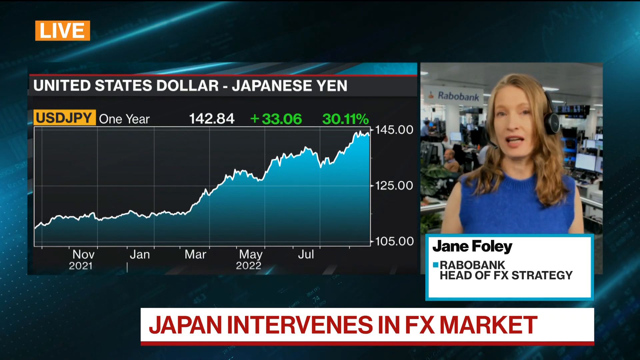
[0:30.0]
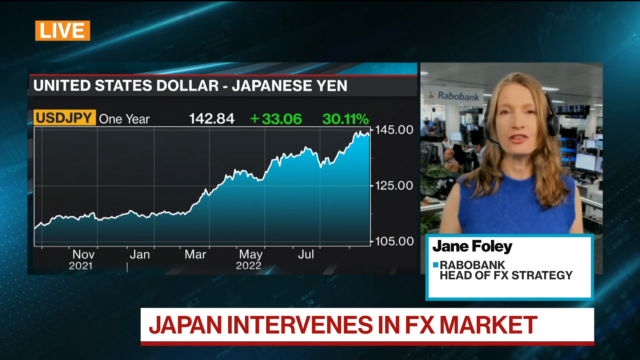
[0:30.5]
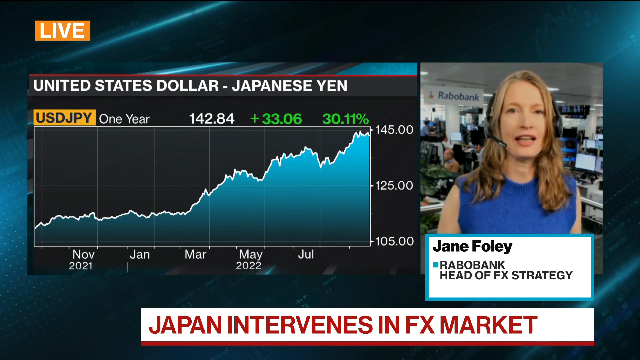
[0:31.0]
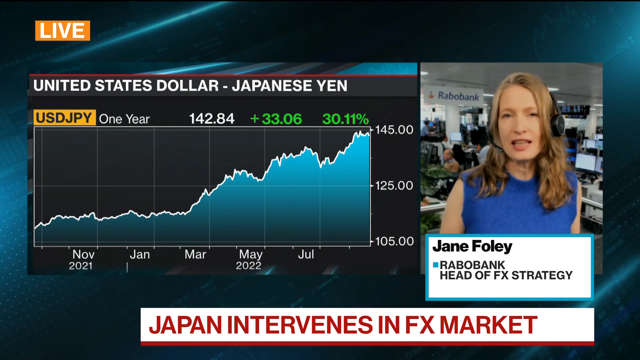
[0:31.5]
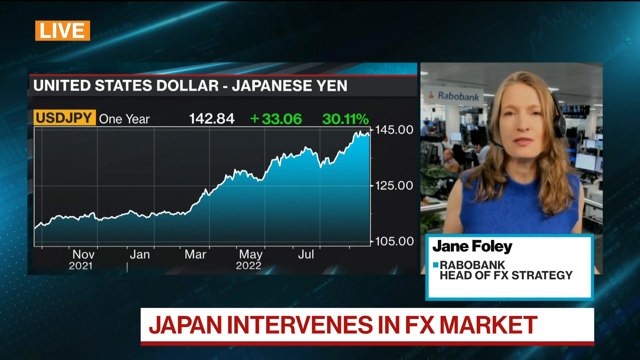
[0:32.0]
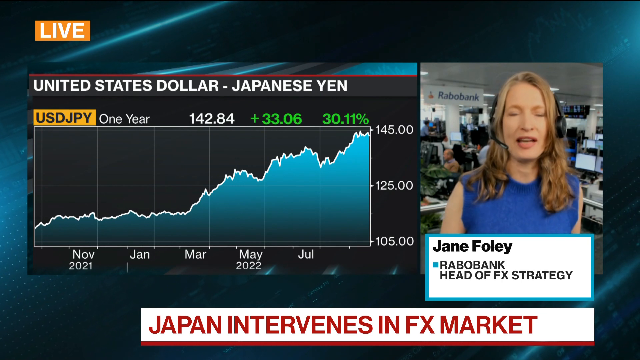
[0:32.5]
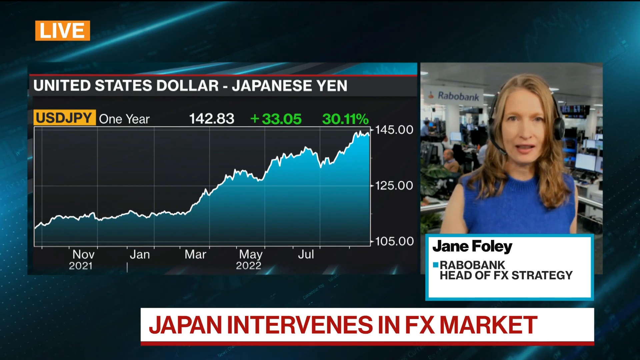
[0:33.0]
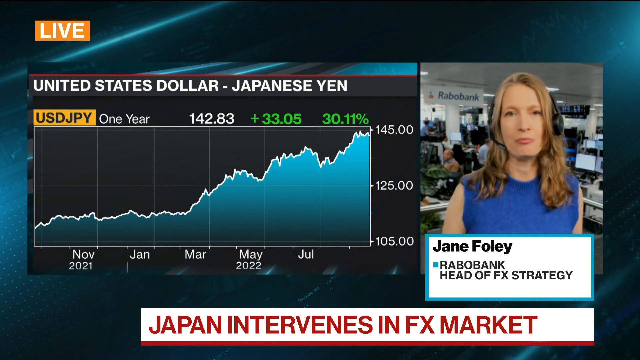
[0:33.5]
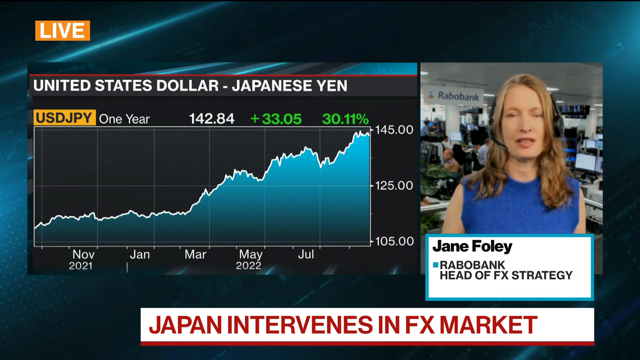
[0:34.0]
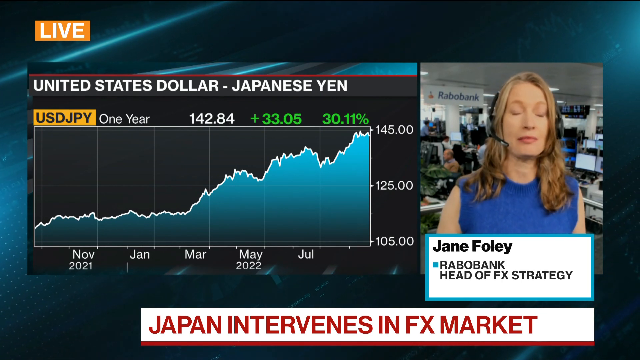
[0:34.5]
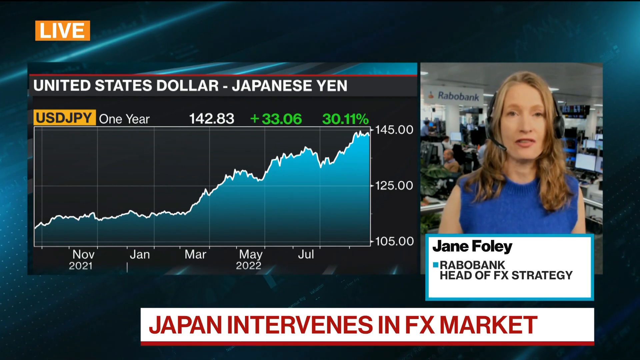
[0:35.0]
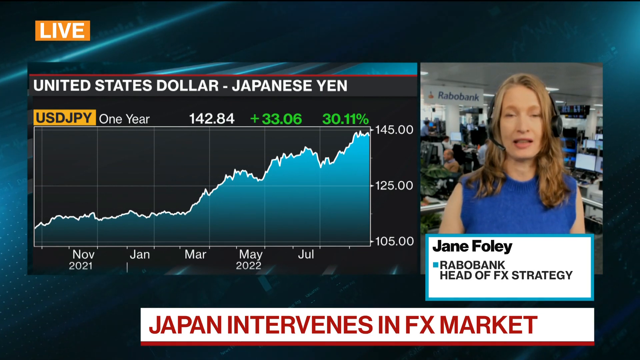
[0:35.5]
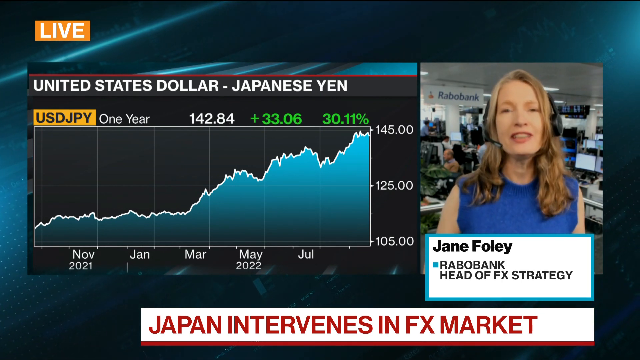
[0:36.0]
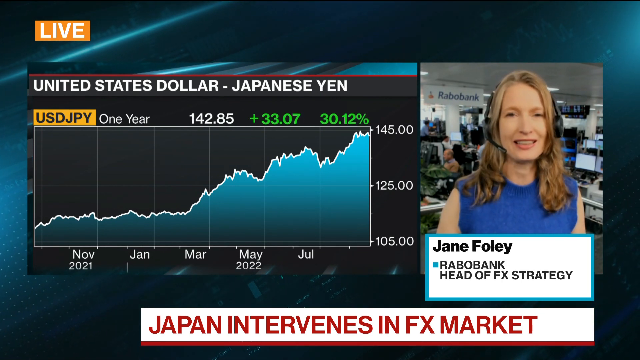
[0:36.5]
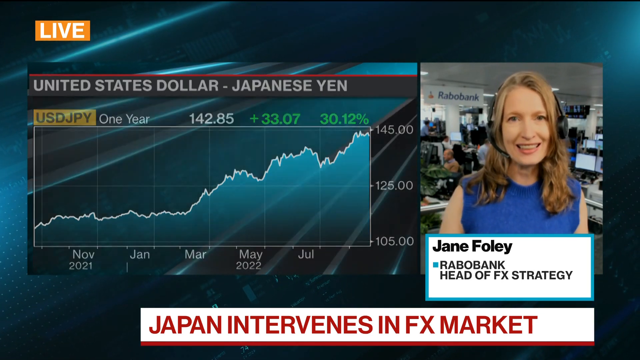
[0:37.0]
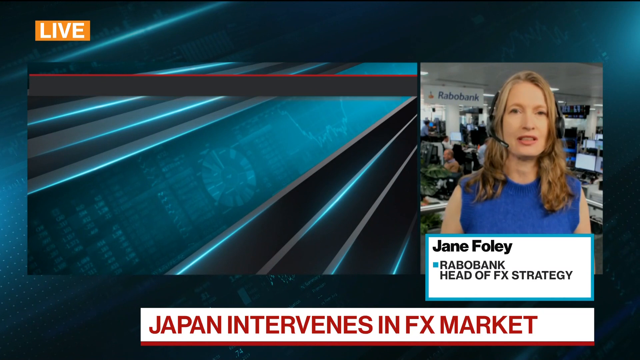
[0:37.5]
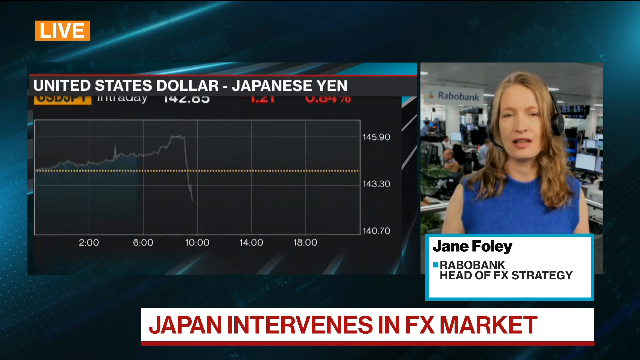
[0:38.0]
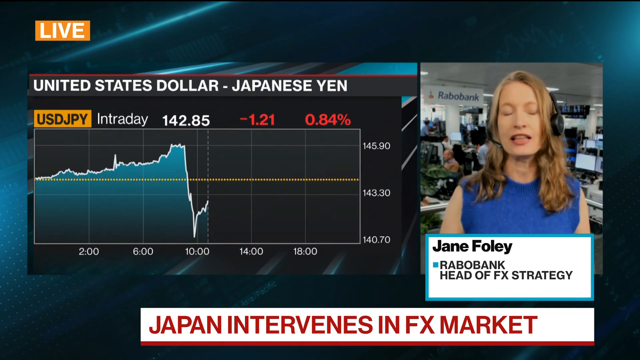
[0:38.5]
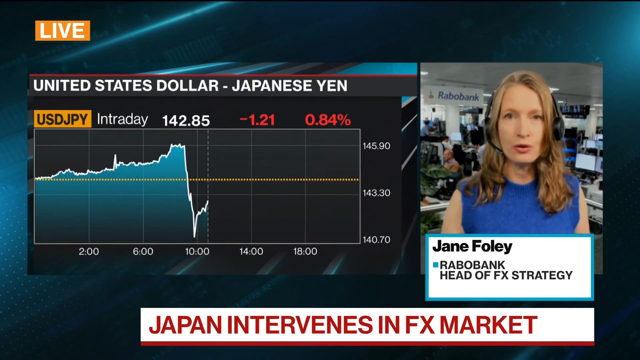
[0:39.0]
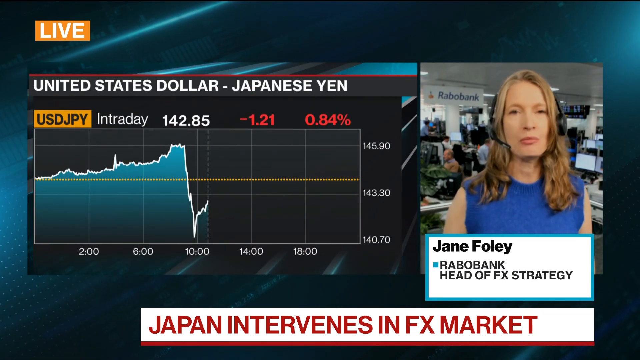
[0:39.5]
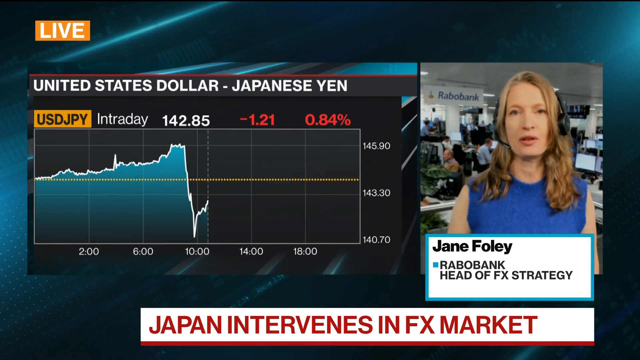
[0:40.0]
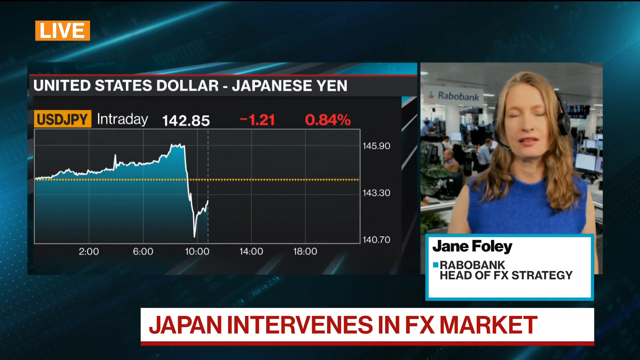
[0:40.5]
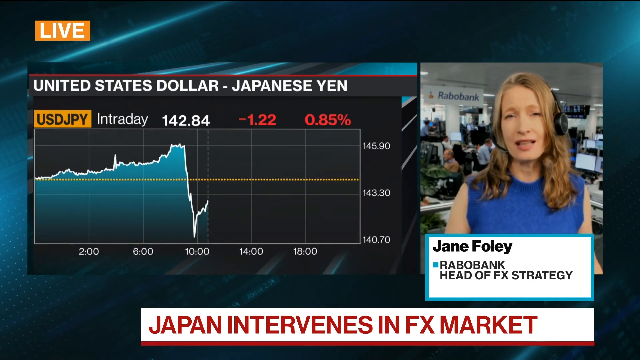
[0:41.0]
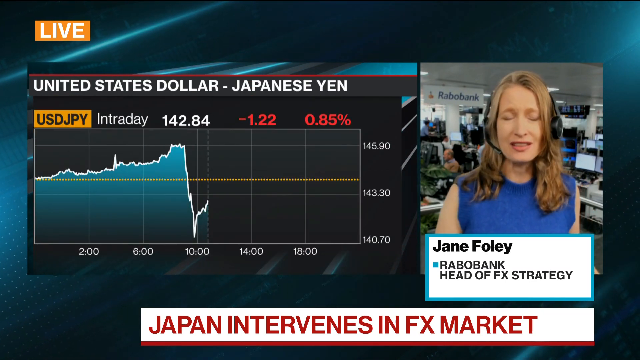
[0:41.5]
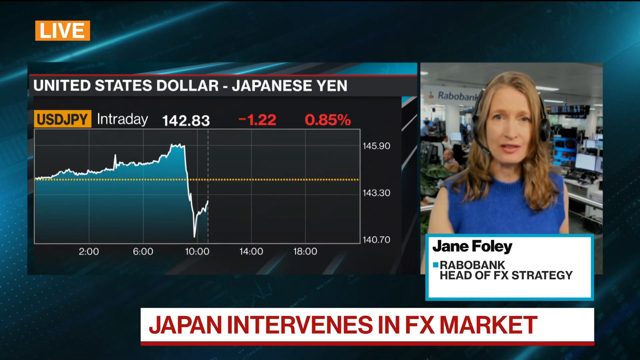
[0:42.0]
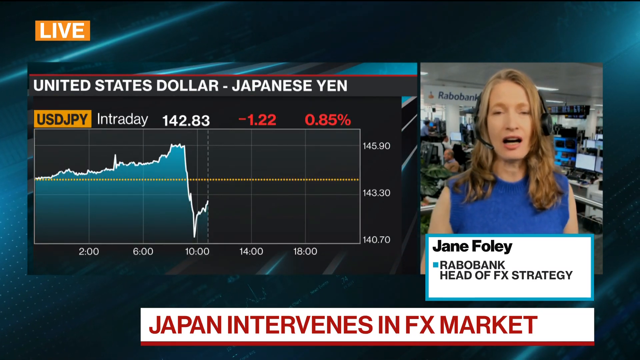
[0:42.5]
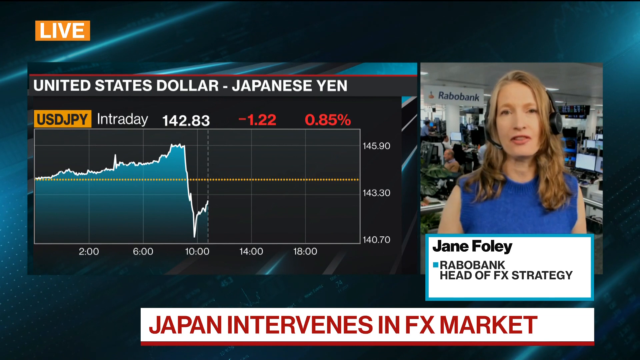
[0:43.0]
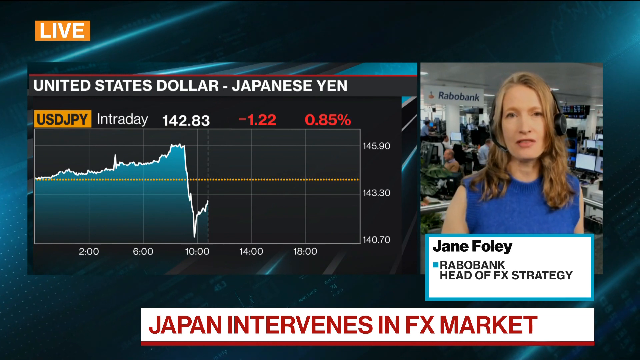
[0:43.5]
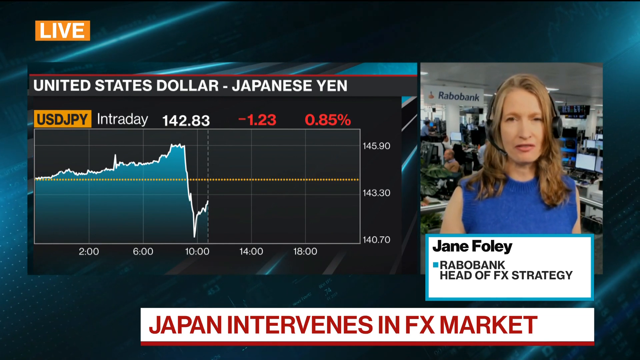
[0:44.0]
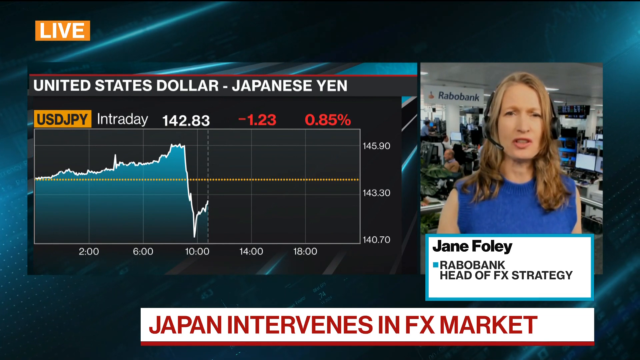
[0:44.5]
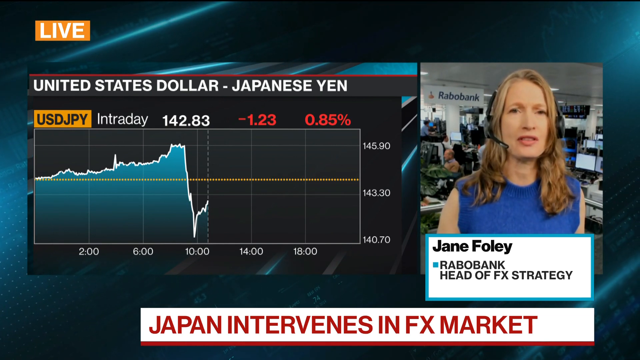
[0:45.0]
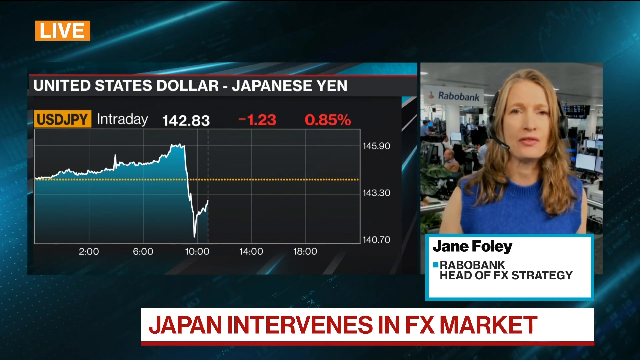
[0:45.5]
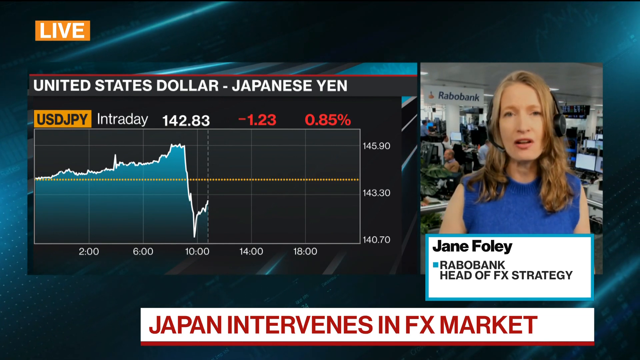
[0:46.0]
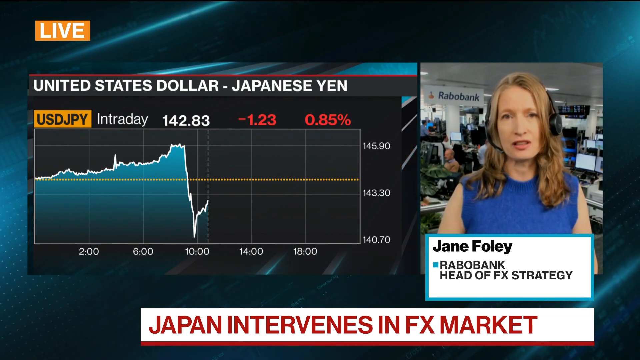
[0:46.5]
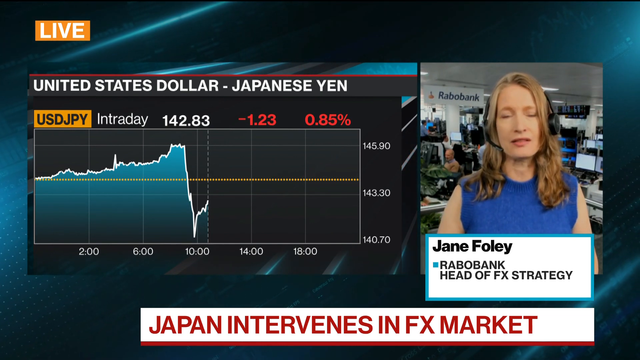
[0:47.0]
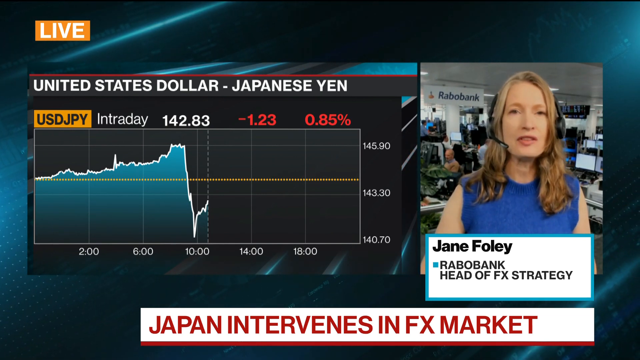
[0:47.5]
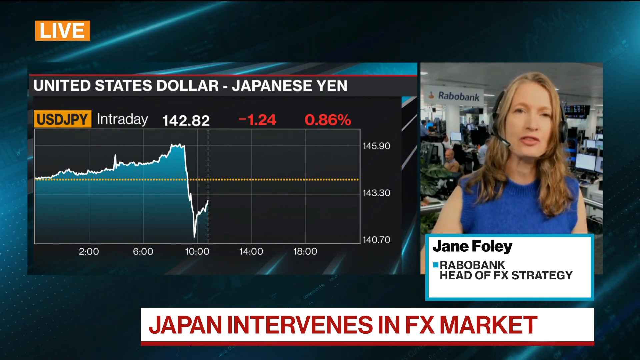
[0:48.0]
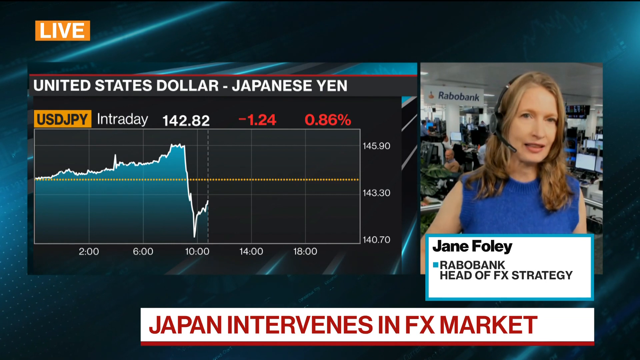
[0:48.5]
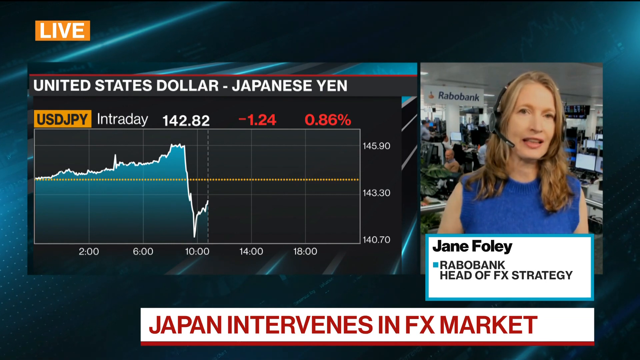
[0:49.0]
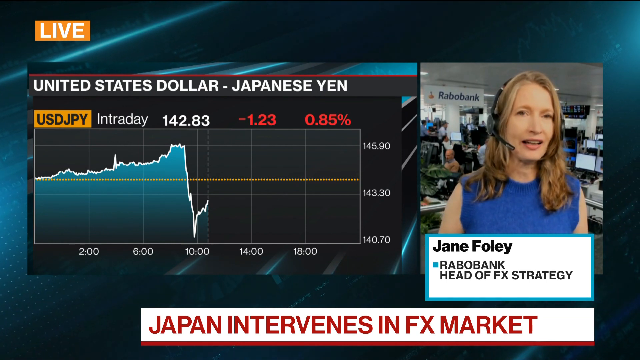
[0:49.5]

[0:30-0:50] What looks to be a news story is running on the screen. A woman in her late 30s or early 40s is speaking in a box on the right side of the screen; her name is Jane Foley and her title is Rabobank Head of FX Strategy. In a box on the left side of the screen is a chart, and a ticker at the bottom reads "Japan intervenes in FX market". The chart, which she seems to be speaking about, shows the Japanese yen versus the United States dollar by month from November 2021 to July 2022. That chart then fades out into another graph of intraday trading, showing how the US dollar versus the Japanese yen has fluctuated in a single day's session. While the second graph is shown, the woman speaks quite animatedly, with her hands and with some emotion.